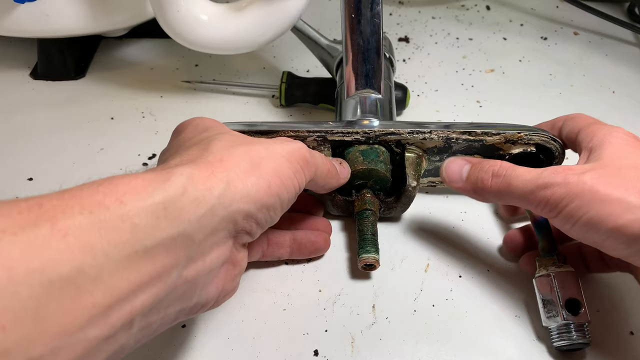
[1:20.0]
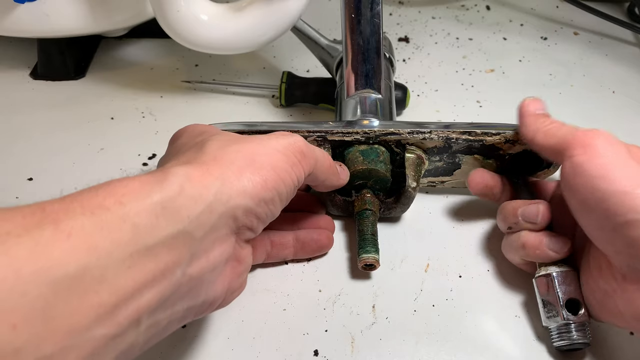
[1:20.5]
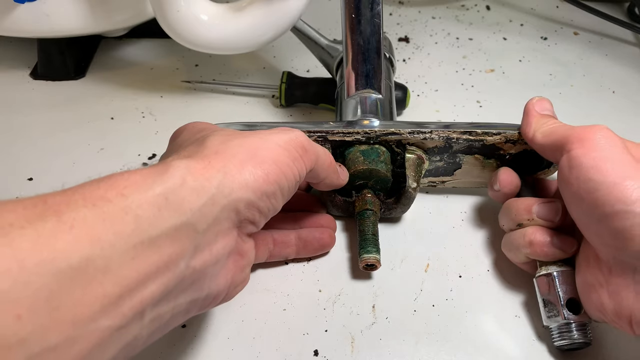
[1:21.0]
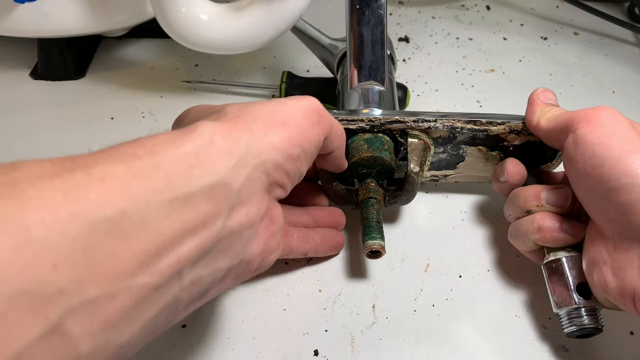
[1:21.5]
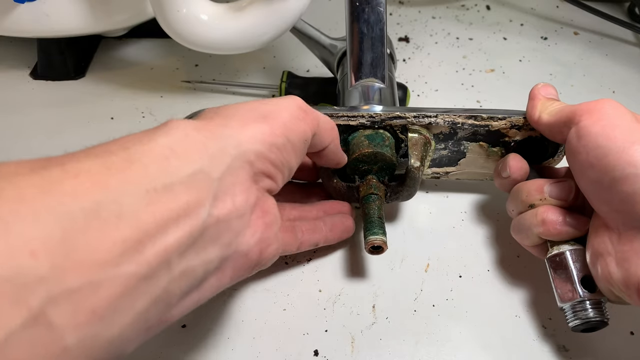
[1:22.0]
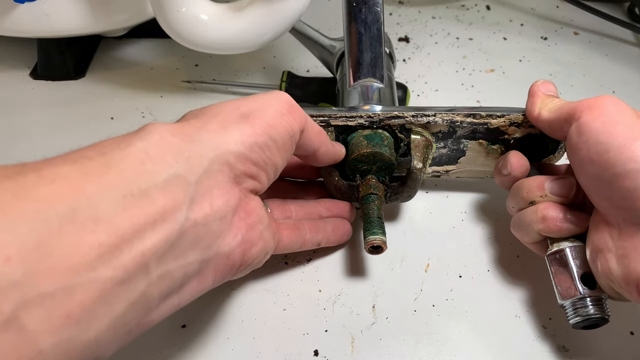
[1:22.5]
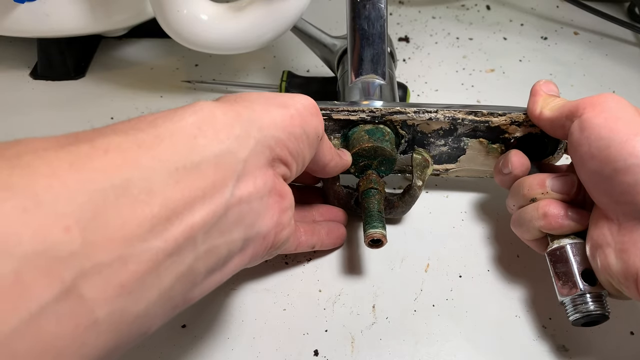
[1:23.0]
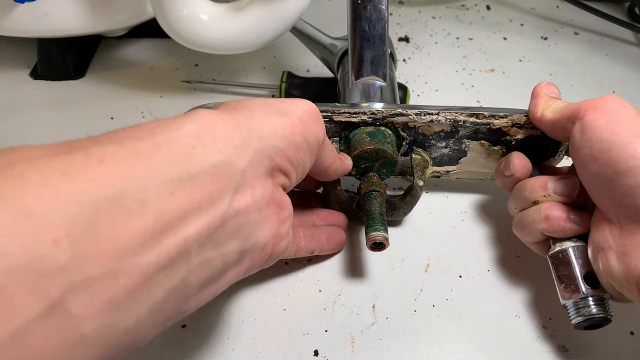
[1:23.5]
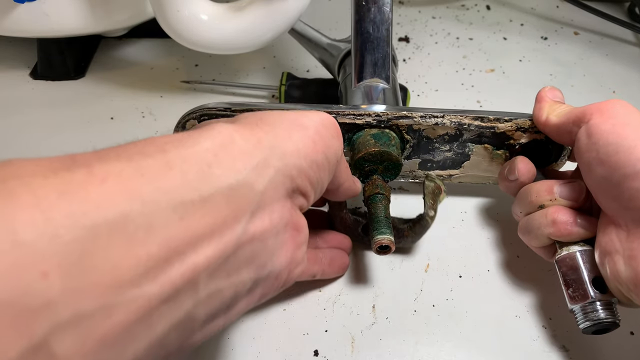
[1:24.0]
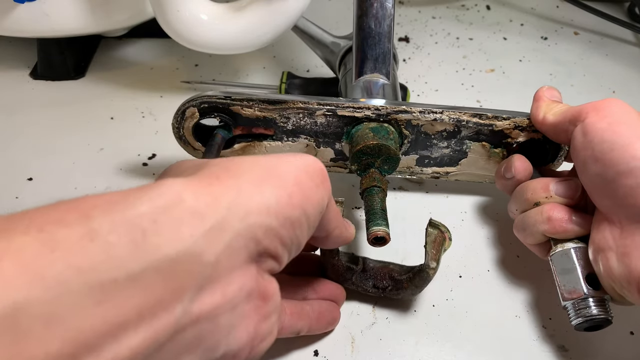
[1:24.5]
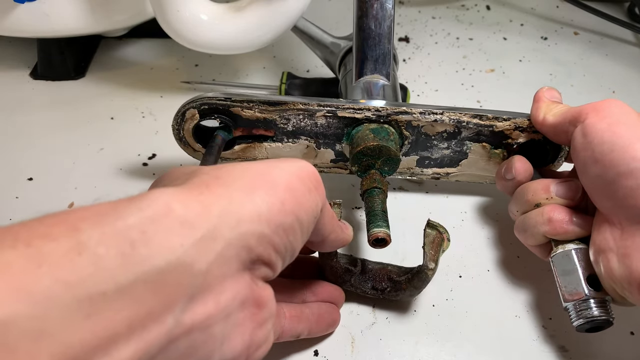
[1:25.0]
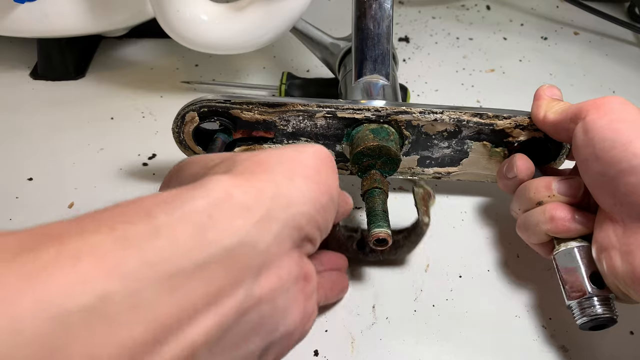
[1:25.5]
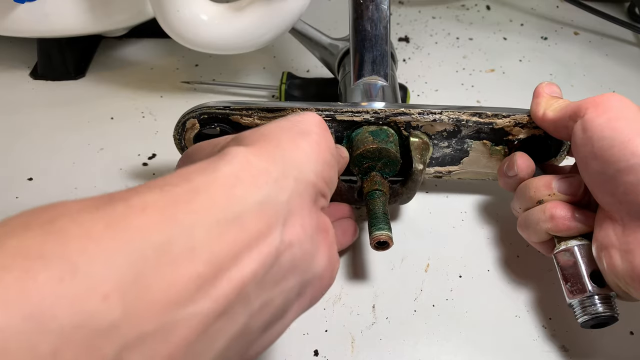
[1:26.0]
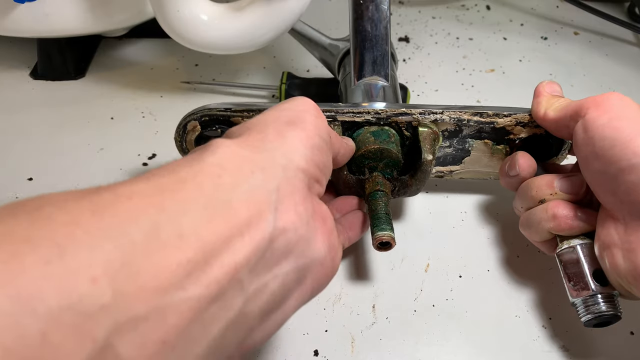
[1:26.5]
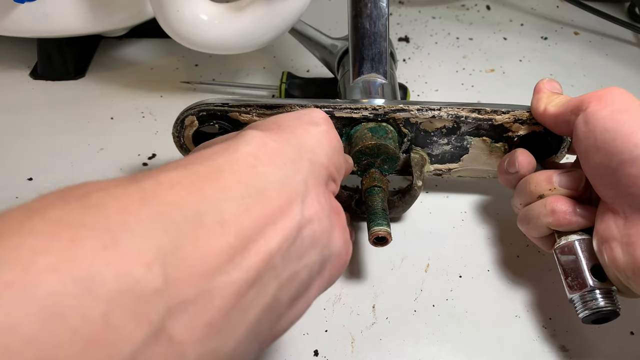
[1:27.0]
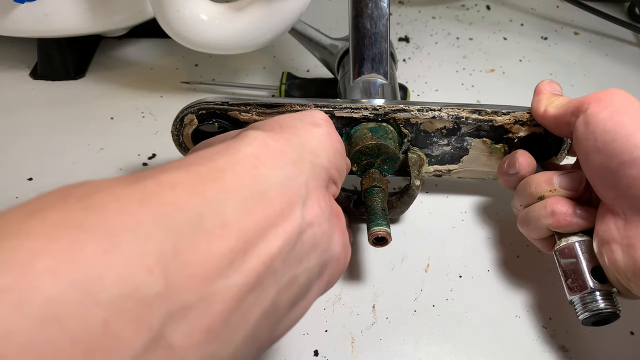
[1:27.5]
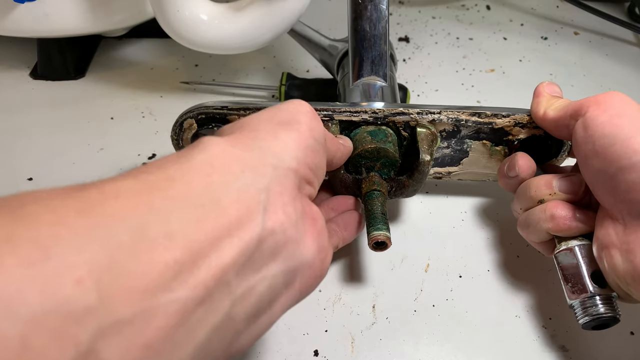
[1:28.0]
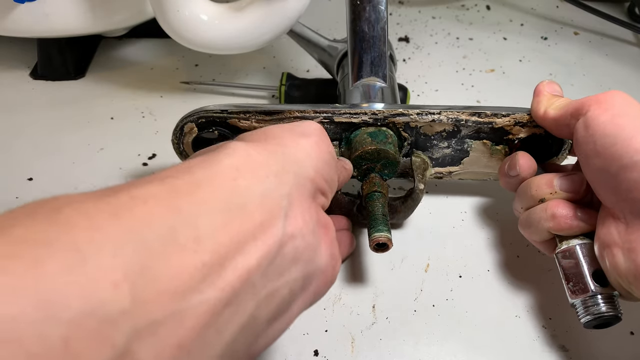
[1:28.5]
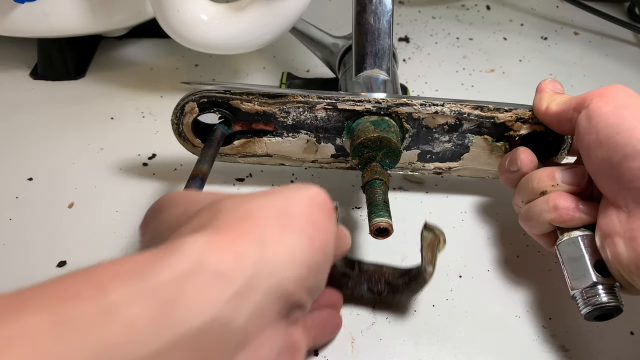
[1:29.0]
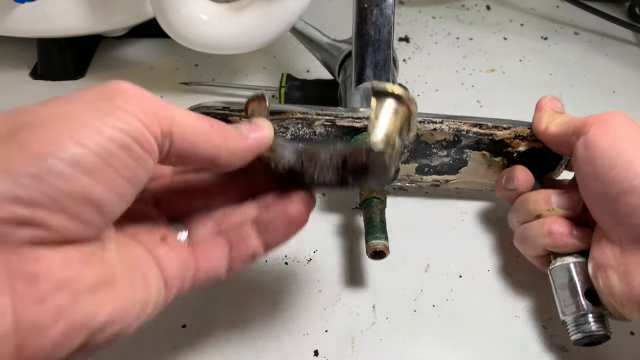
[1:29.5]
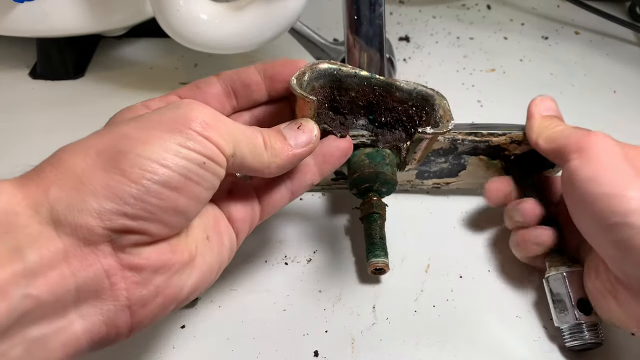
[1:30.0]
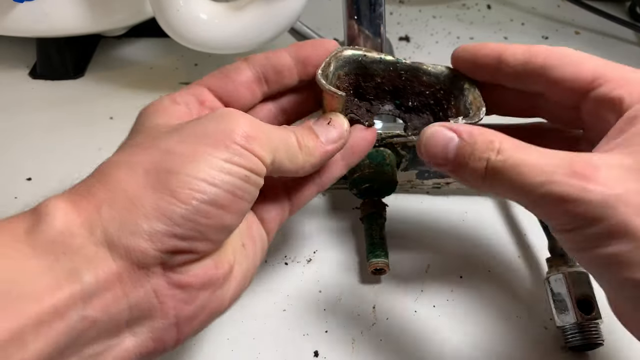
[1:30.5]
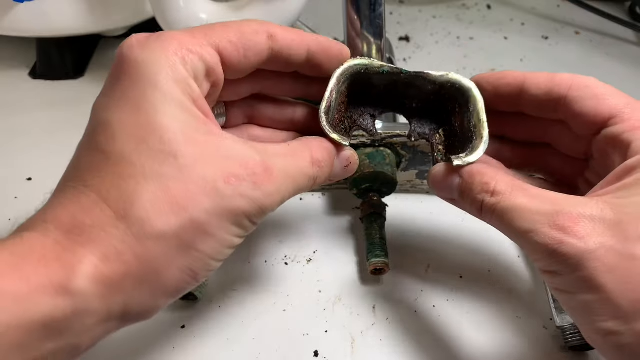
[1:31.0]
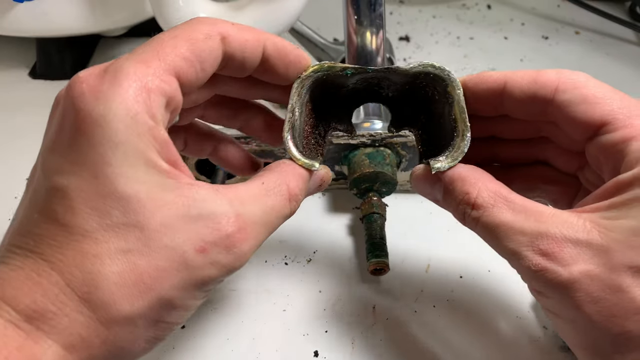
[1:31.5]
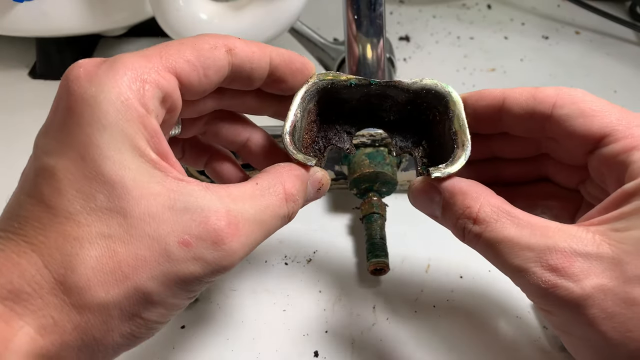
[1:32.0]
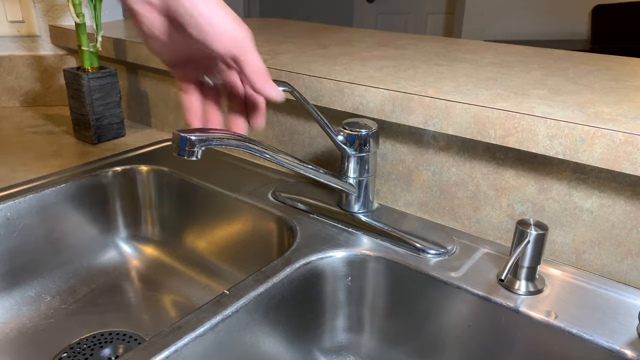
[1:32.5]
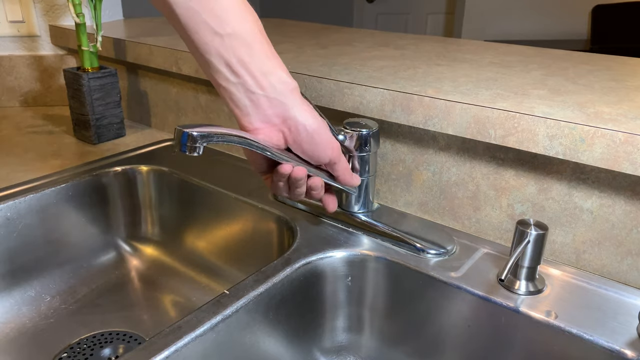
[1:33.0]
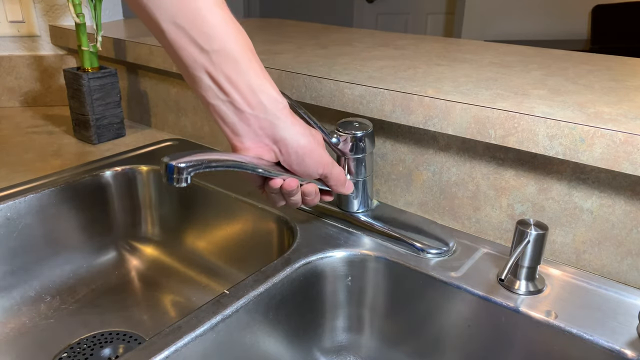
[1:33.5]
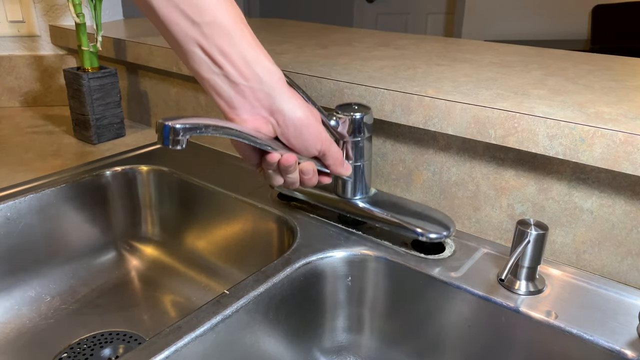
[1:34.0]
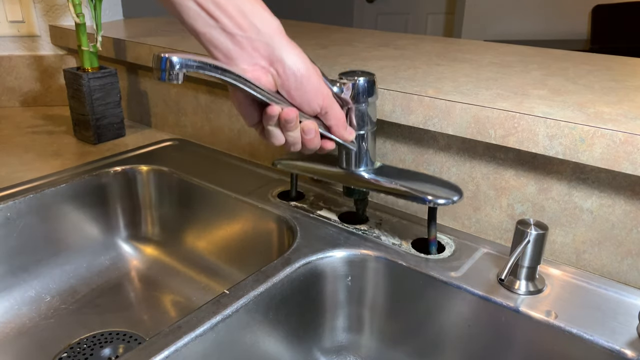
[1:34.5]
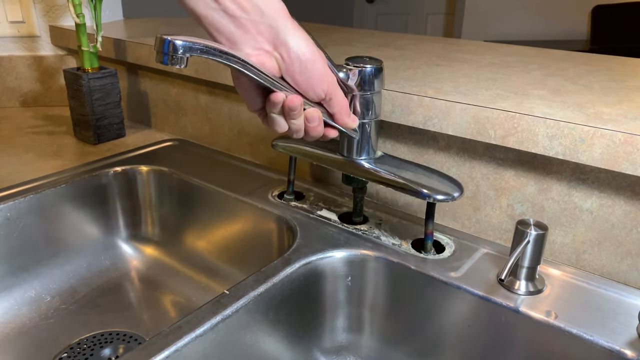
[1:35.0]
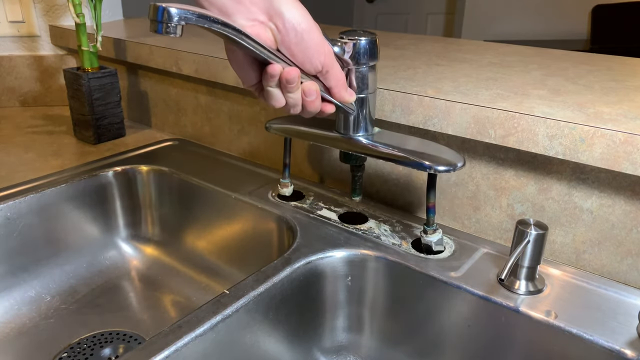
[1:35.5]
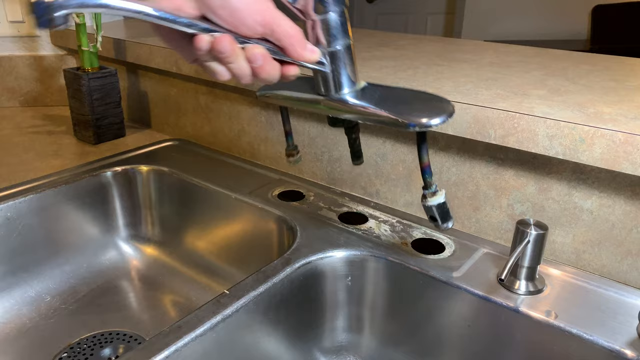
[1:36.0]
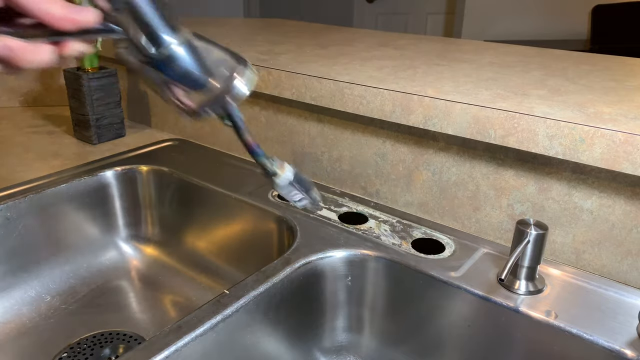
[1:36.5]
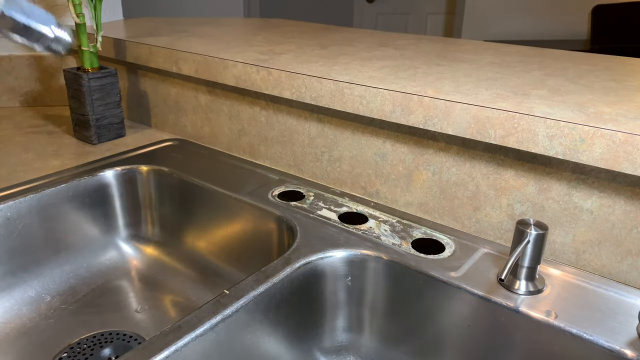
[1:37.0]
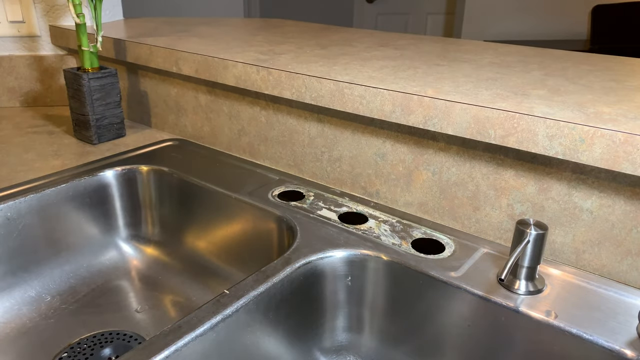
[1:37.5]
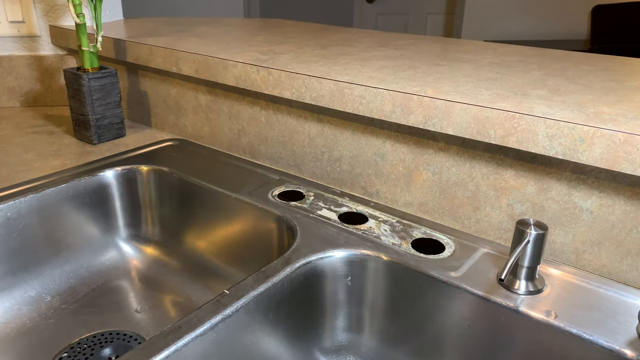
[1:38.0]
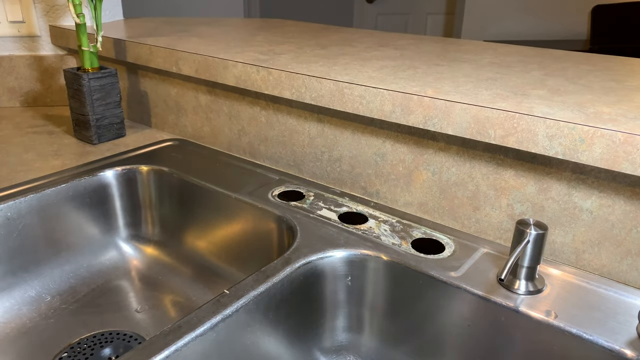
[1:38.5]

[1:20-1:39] The man removes the damaged piece of metal casing. Holding the pipework on the right-hand side of the screen with his right hand, he draws the loose broken piece down, puts it back into place, then moves it downwards again and slides it off. He holds it on both sides to show the damage. He then moves to the sink area above and holds the base of the arm of the water dispenser part of the tap, with his fingers wrapped underneath it and his thumb and the top of his hand between it and the handle, and lifts it out of its position. Three holes are visible in the back of the sink, and three connectors attached to the tap mechanism go through it and are becoming separated. Dirt and a build-up of lime scale are visible on the part of the surface where the tap has been removed. Another item on the back of the sink unit also has a stem; it is stainless steel, quite shiny and clean, with a tube out the front, and is probably a soap dispenser.